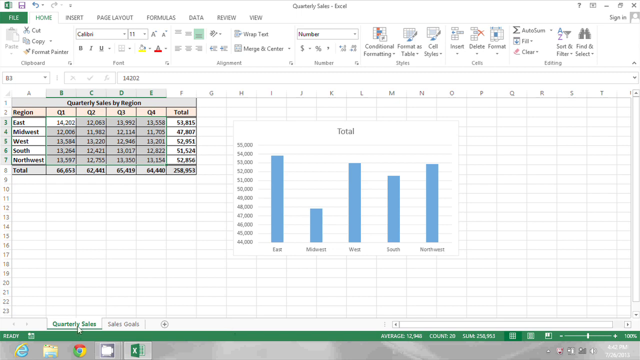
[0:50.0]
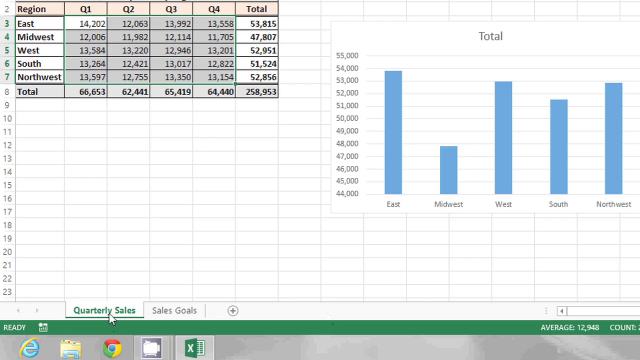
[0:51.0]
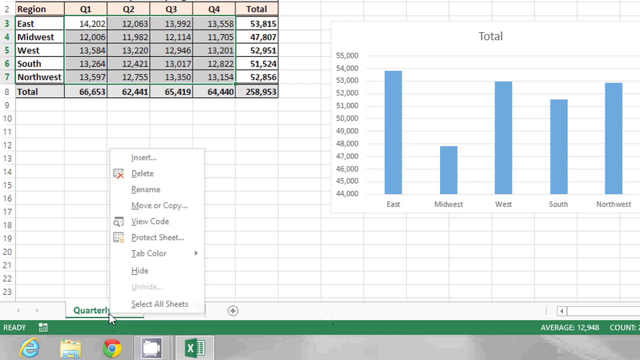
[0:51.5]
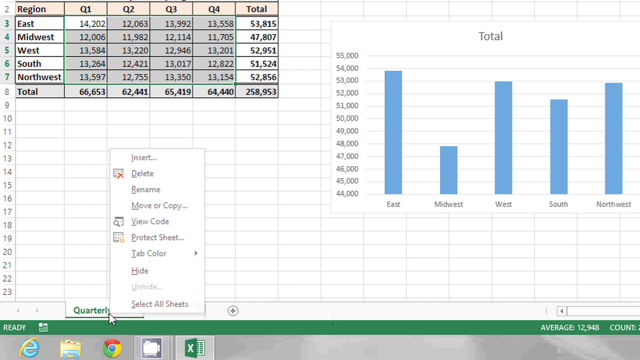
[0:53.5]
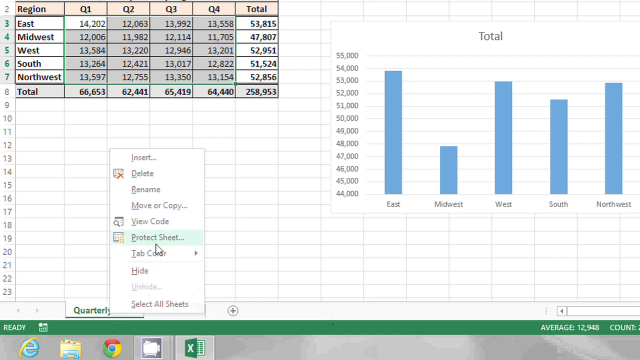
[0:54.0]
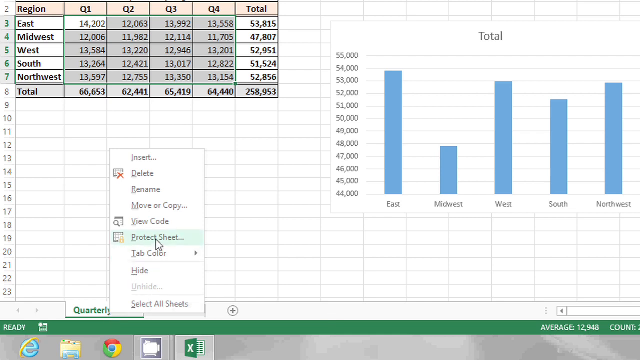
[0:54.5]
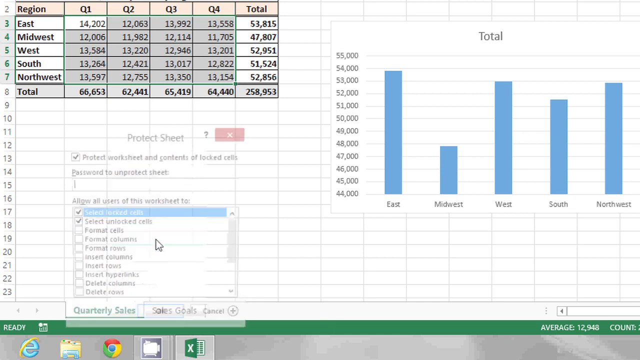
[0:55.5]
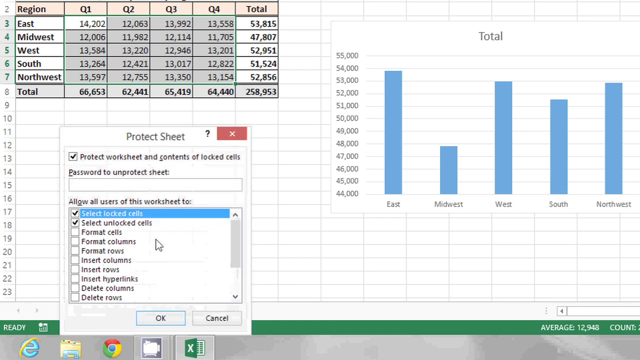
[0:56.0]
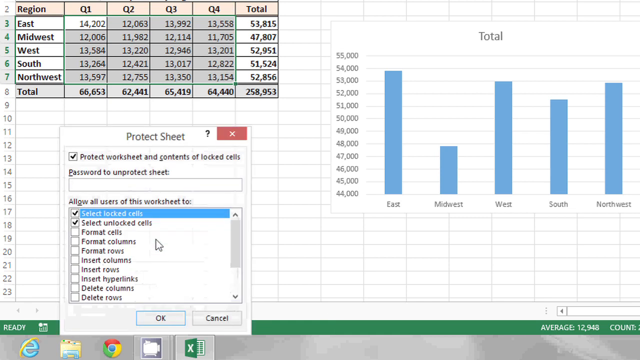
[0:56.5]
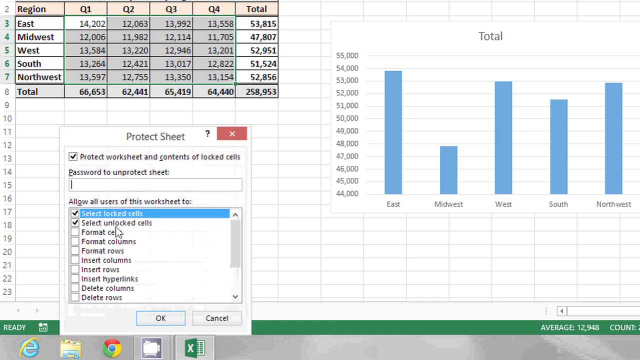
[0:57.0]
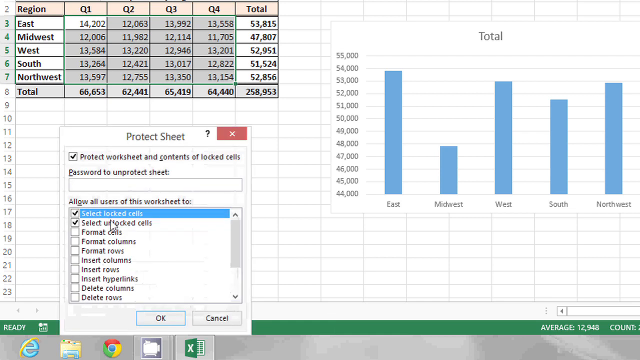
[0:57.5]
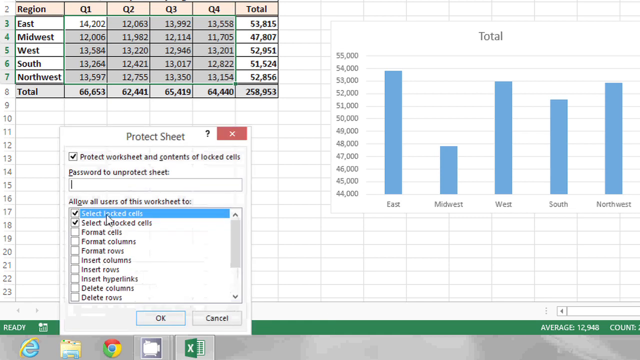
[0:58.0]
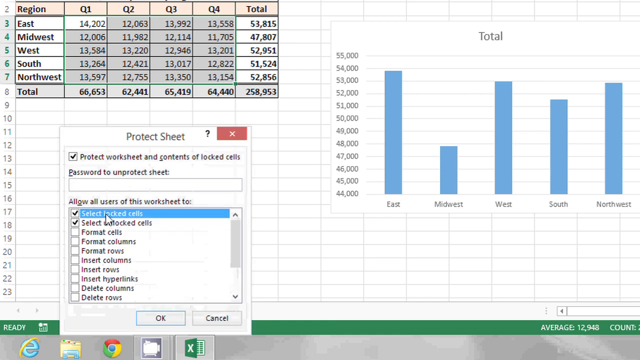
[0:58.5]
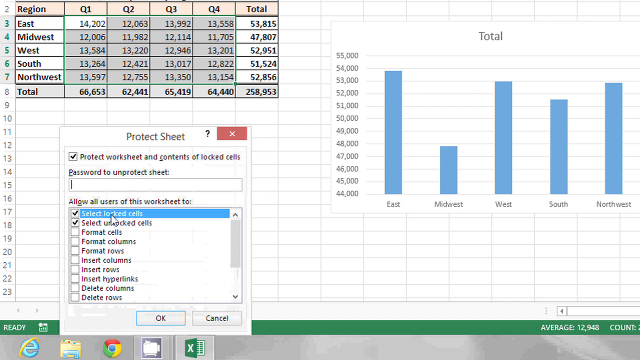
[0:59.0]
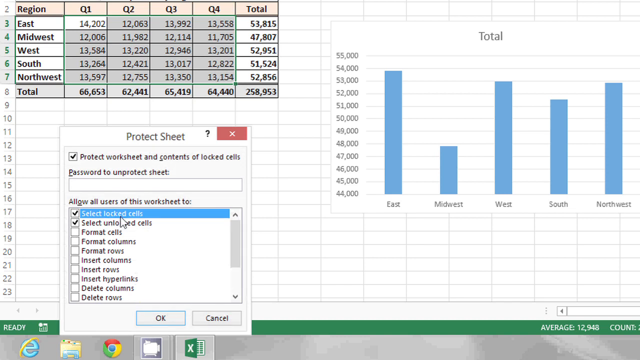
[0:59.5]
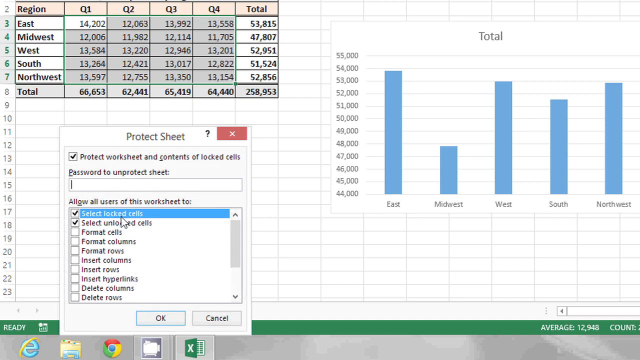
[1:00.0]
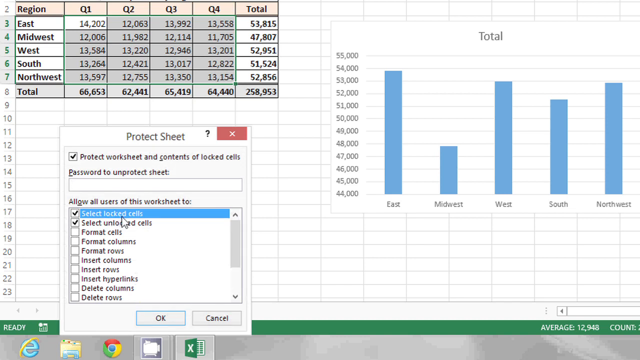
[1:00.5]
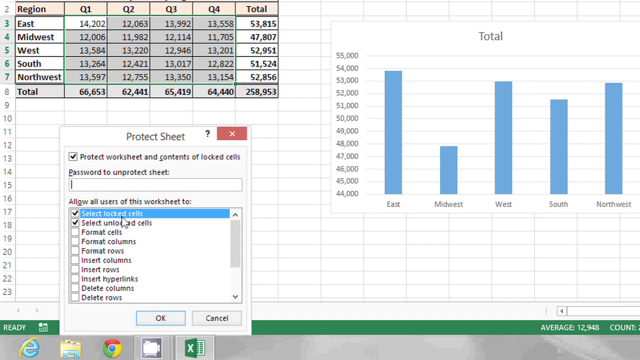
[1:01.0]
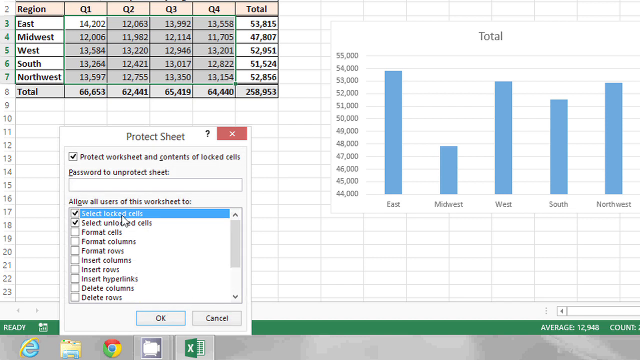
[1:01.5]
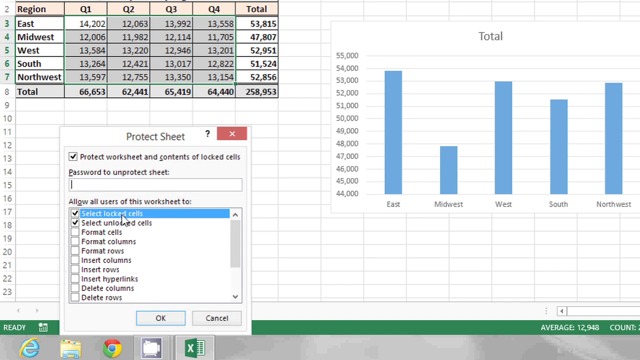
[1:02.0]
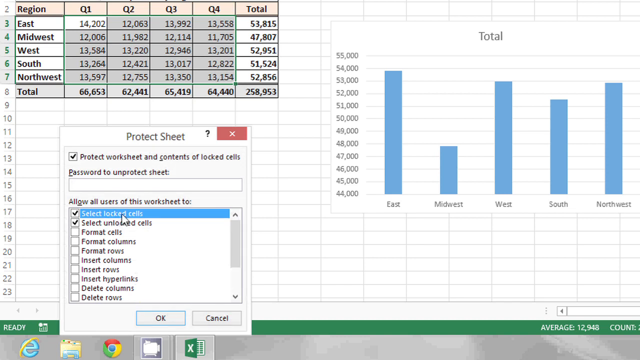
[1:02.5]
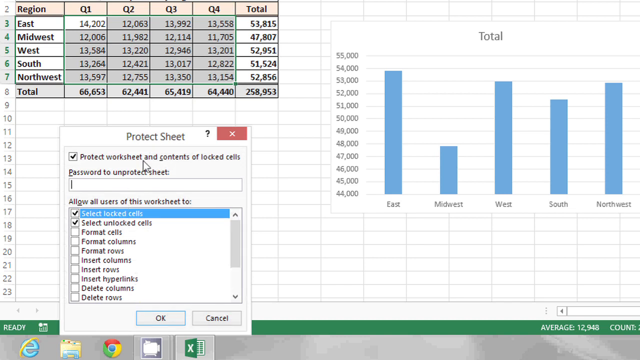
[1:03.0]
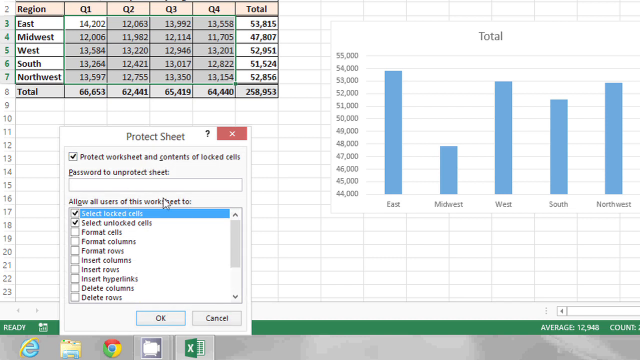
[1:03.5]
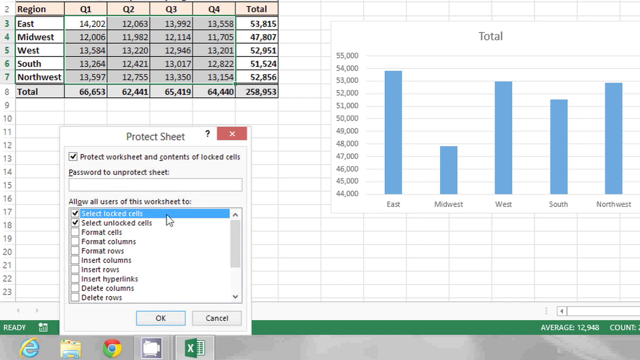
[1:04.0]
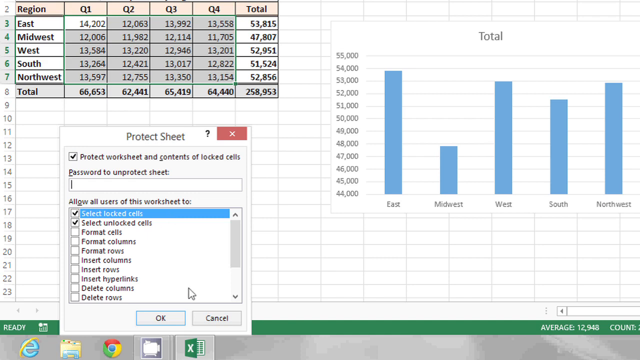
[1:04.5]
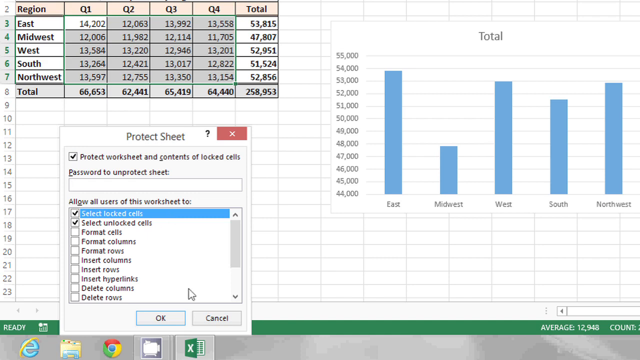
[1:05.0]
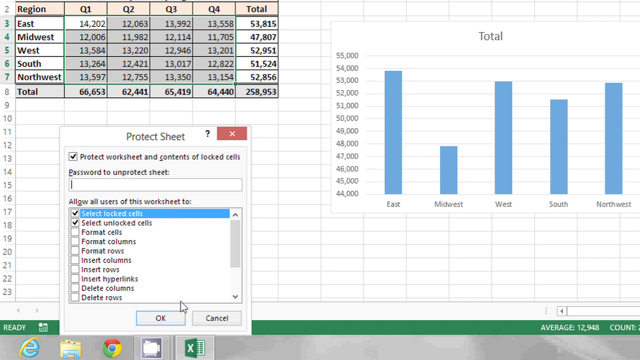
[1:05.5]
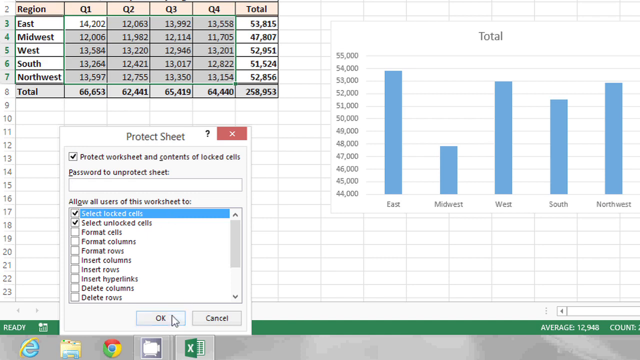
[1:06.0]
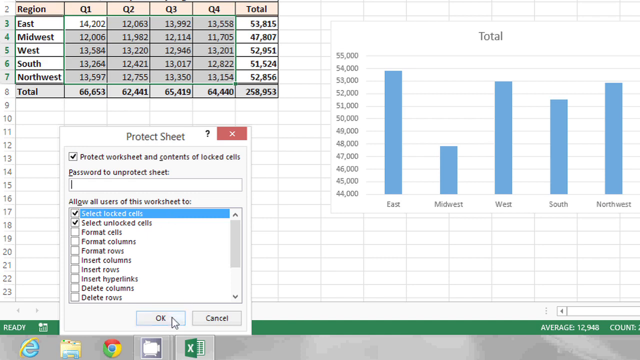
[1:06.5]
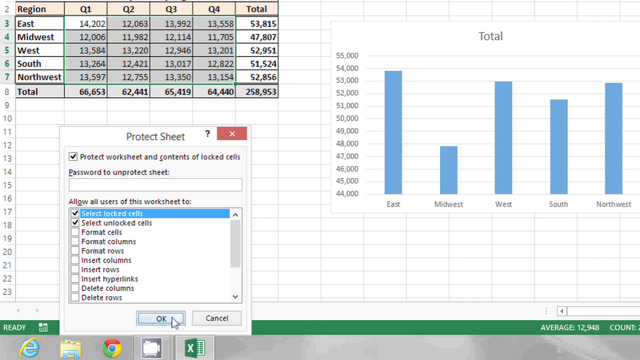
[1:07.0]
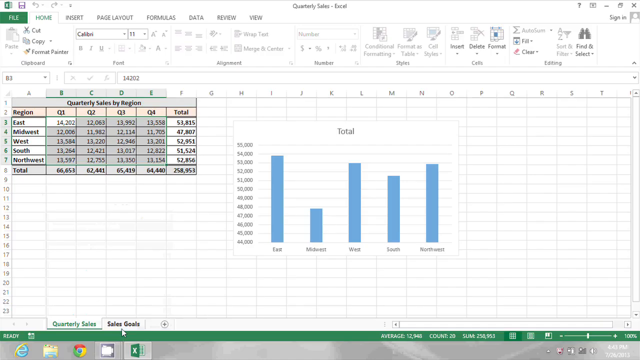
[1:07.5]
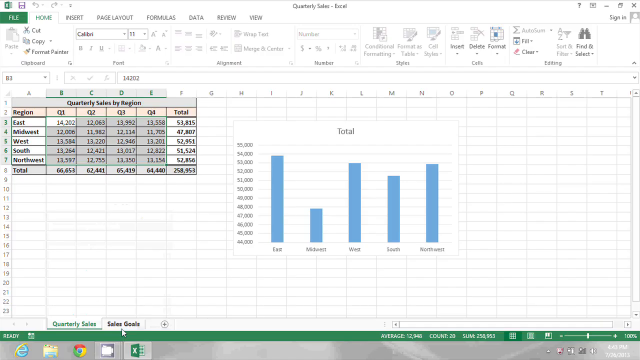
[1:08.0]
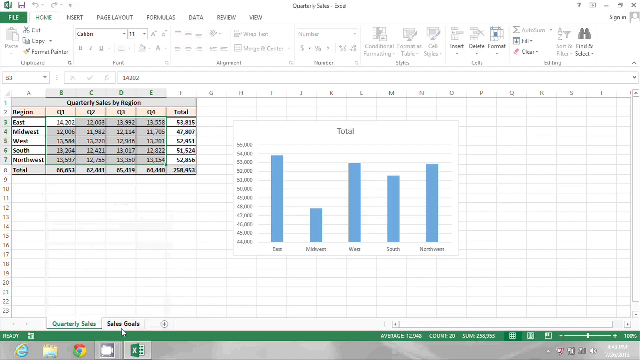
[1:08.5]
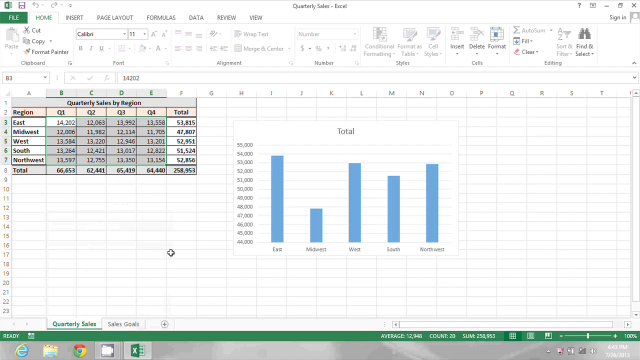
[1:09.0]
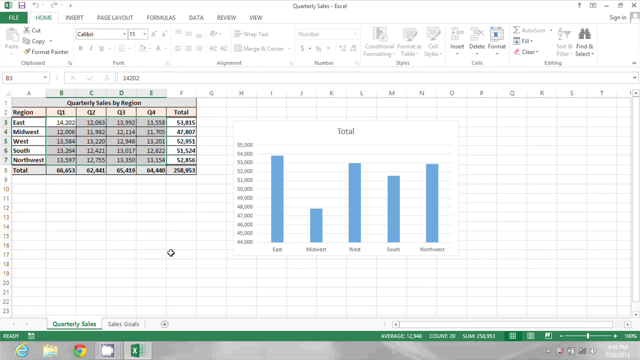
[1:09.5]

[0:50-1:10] The Excel sheet is shown in full, with the mouse on the quarterly sales section at the bottom. The camera zooms into the bottom left, and as she right-clicks the quarterly sales section, some options pop up. The mouse moves slowly up to the protect sheet option and she clicks it, opening the protect sheet window, which shows a set of settings. She moves the mouse up to the select locked cells option, which is already highlighted blue, hovers over it, then brings the mouse back down to the OK button and clicks it, closing the window. She then moves the mouse slightly up and leaves it in the center of the screen.